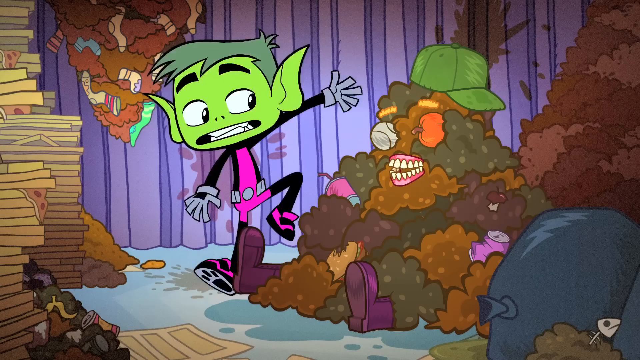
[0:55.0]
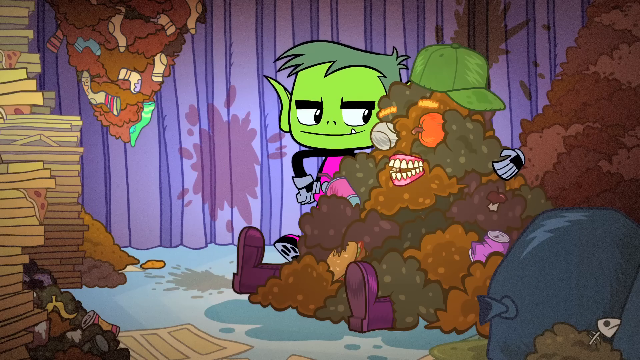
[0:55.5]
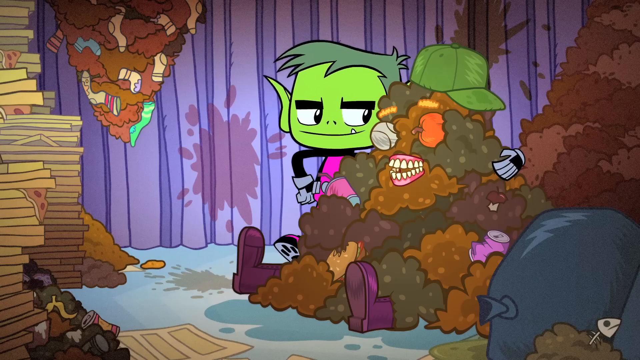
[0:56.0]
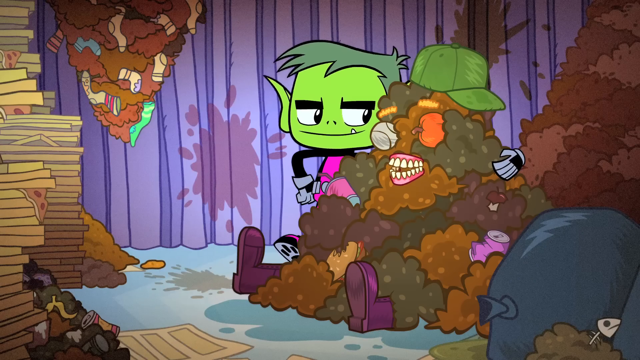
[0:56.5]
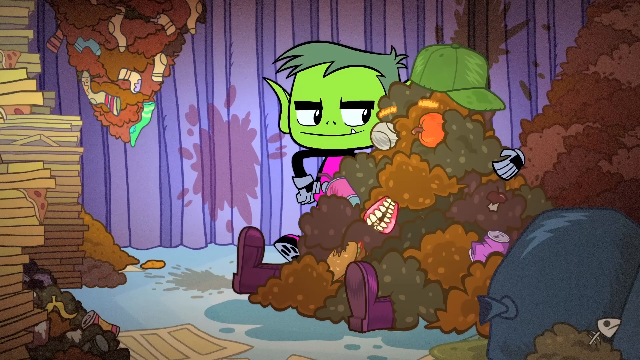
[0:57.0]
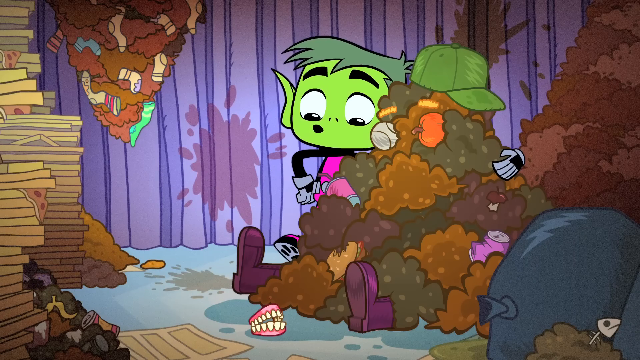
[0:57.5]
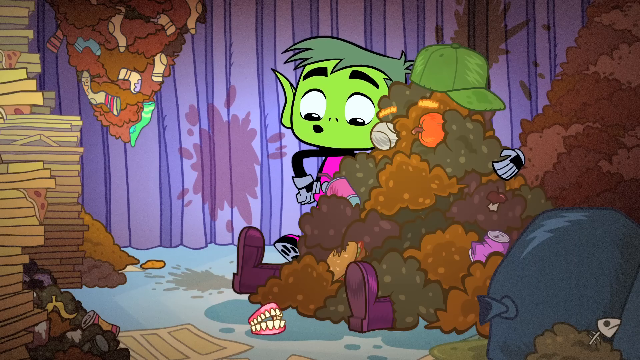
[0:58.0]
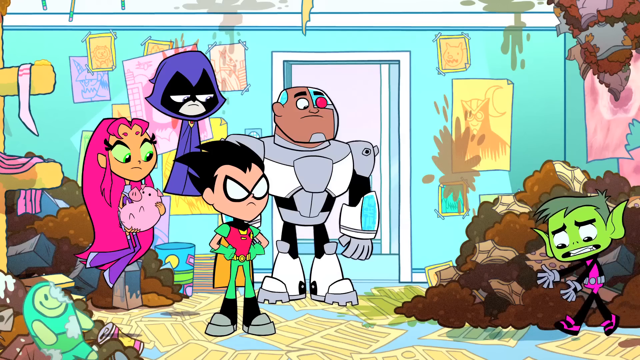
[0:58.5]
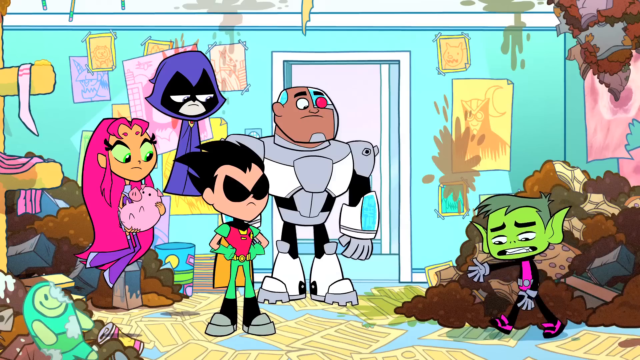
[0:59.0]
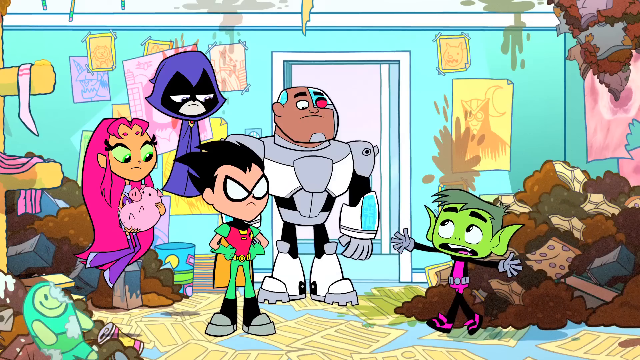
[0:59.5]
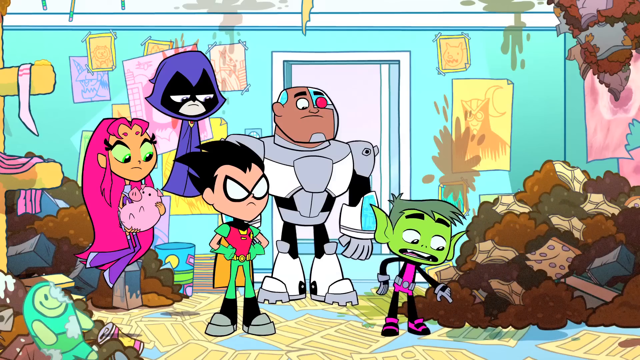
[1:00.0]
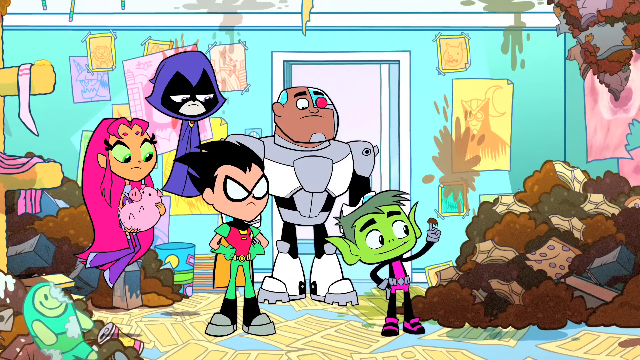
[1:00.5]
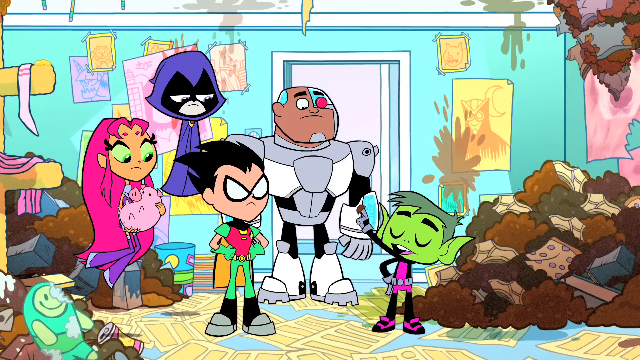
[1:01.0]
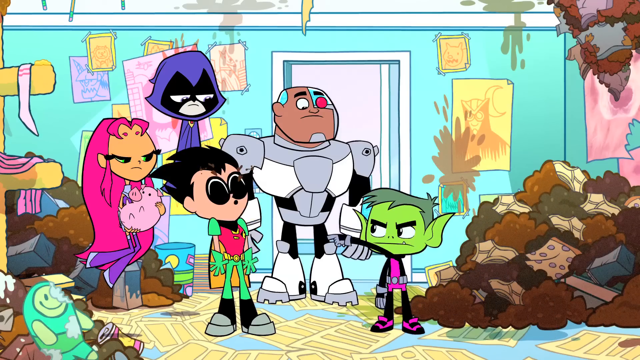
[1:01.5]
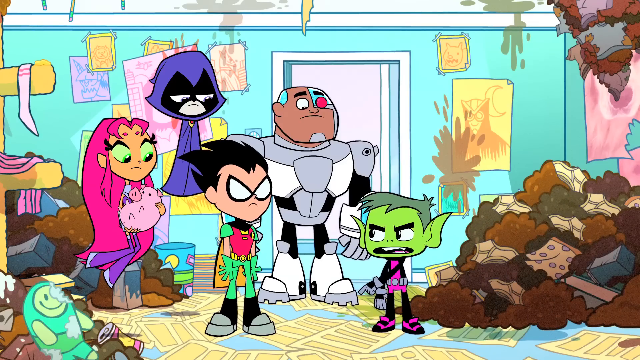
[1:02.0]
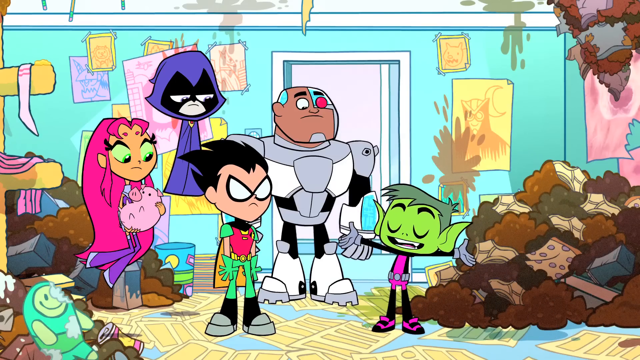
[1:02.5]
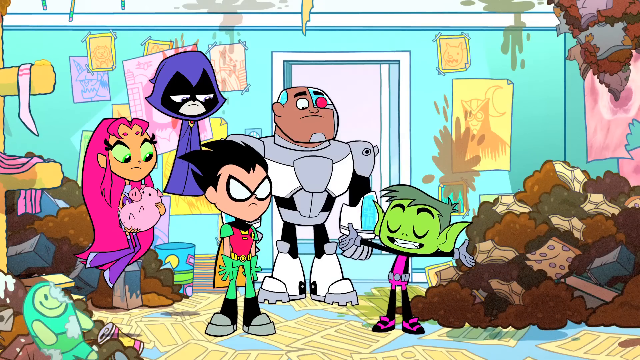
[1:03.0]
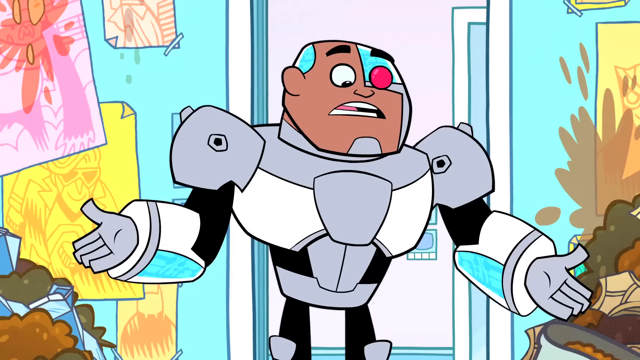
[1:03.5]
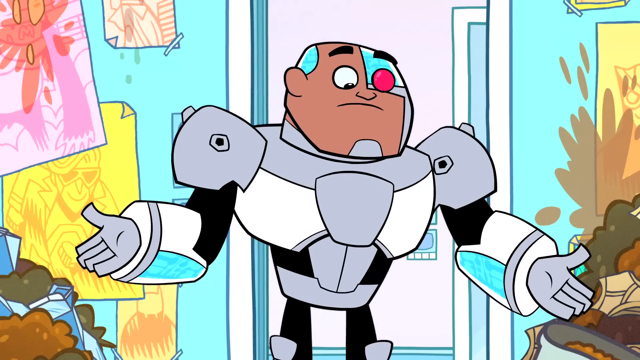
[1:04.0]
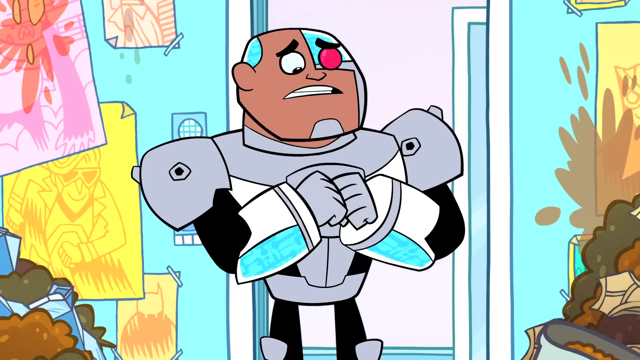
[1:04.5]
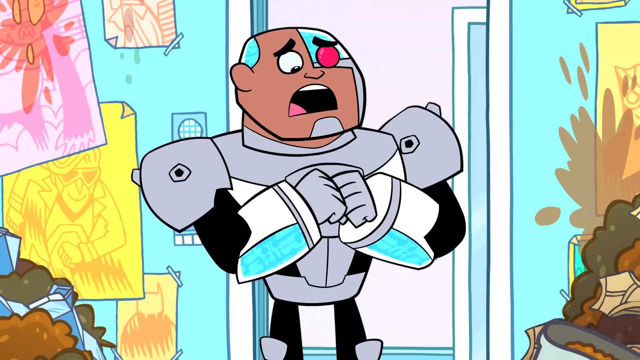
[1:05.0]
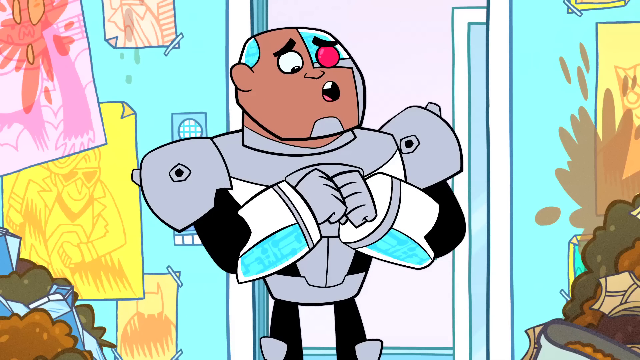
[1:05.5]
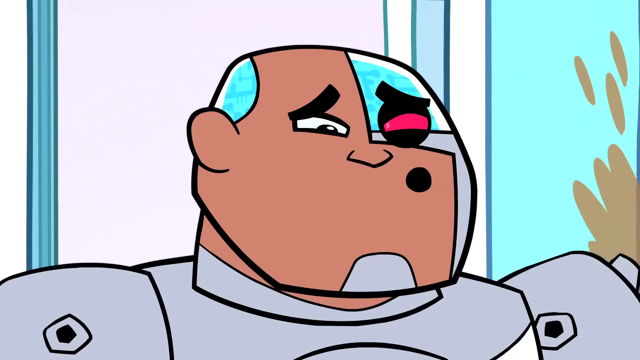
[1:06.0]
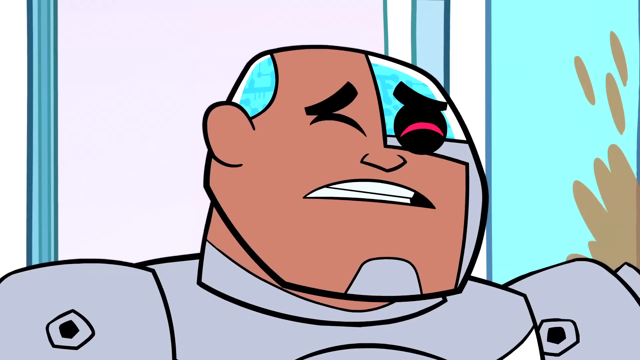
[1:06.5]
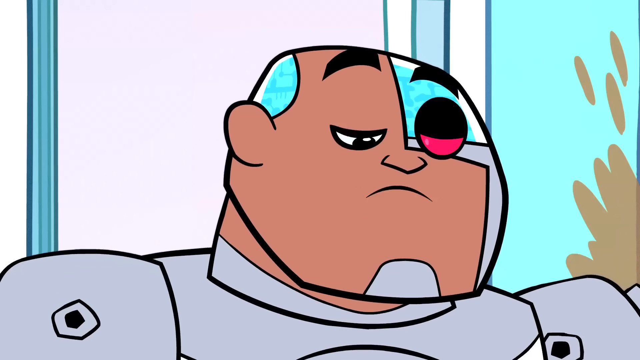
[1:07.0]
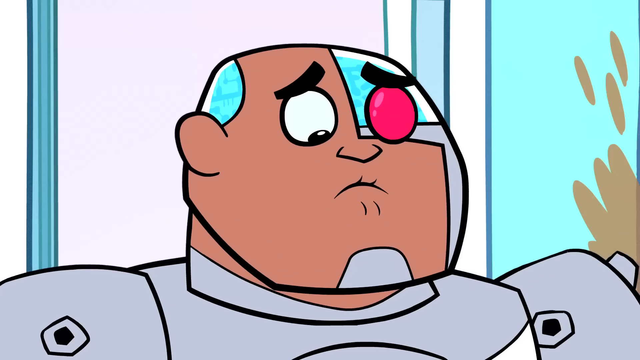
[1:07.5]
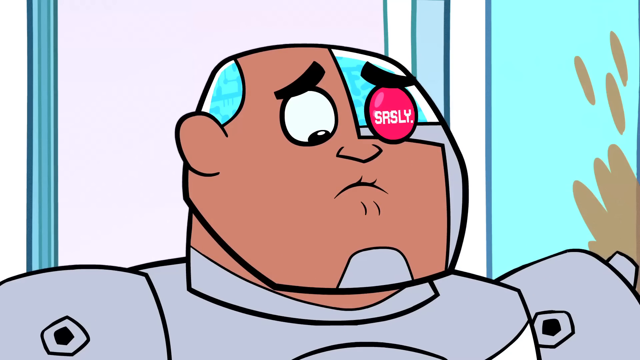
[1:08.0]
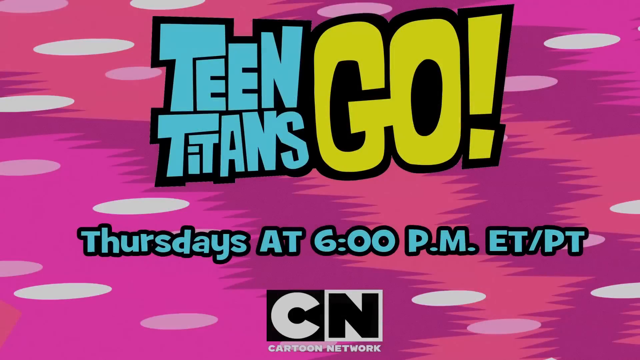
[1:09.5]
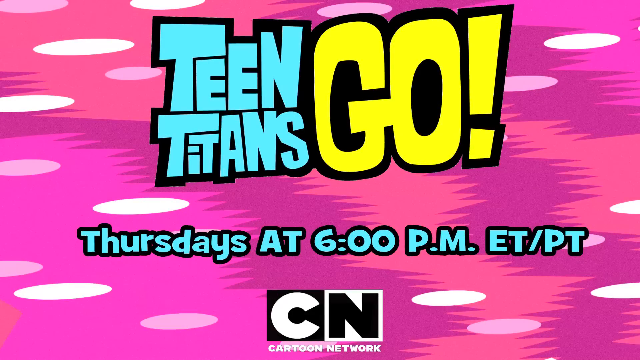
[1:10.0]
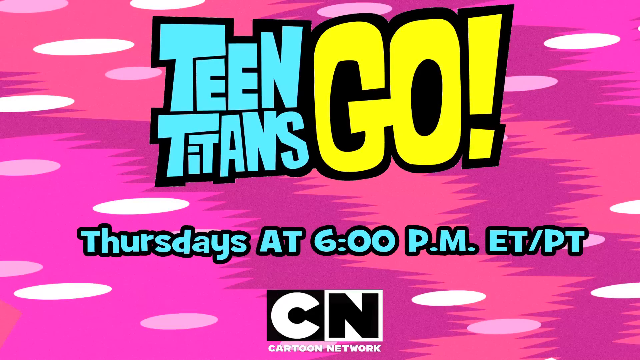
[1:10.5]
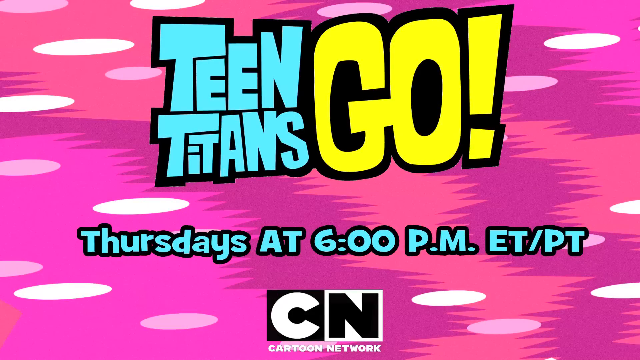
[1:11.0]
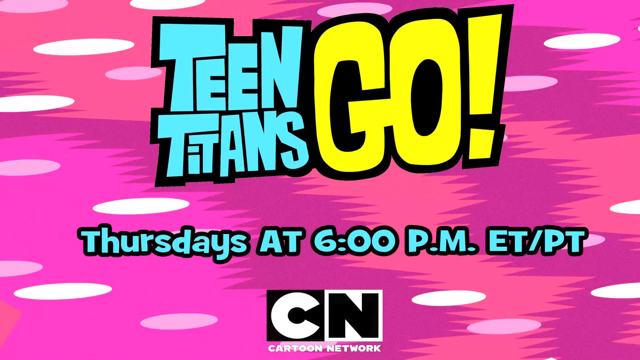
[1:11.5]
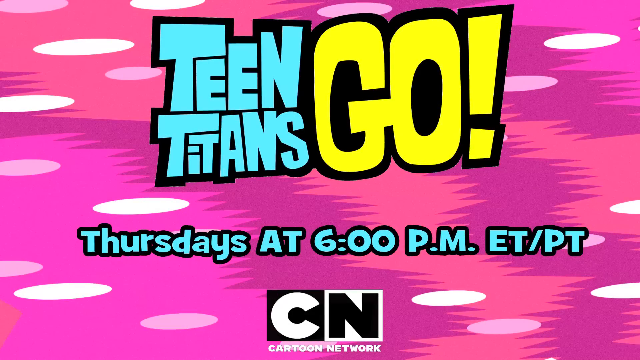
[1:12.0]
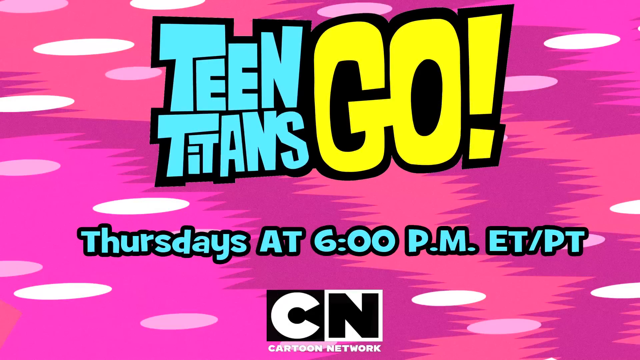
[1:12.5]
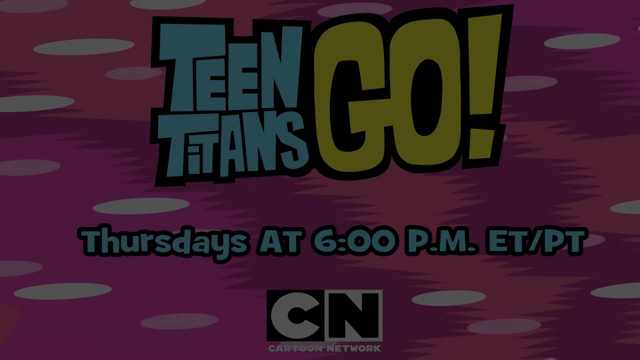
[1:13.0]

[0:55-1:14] A scene from Teen Titans Go, an animated television show with very bright, vivid coloring and animated DC superhero characters, plays out. Beast Boy, very bright green in coloring, is out in the open with his arm around a pile of garbage that has a pumpkin and a baseball for eyes and some fake teeth in it; he seems to move his arm and the fake teeth appear to come out. He walks back toward a group of superheroes, Robin, Starfire, Raven and Cyborg, and they all seem to be speaking together in the room surrounded by garbage. The camera then zooms in on Cyborg's face to show his eye apparently malfunctioning. Finally, the Teen Titans Go logo appears in blue and yellow, along with the viewing time, which reads "Thursday at 6pm ET/PT on Cartoon Network".